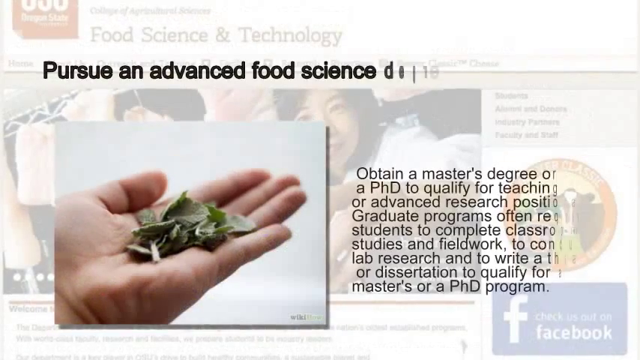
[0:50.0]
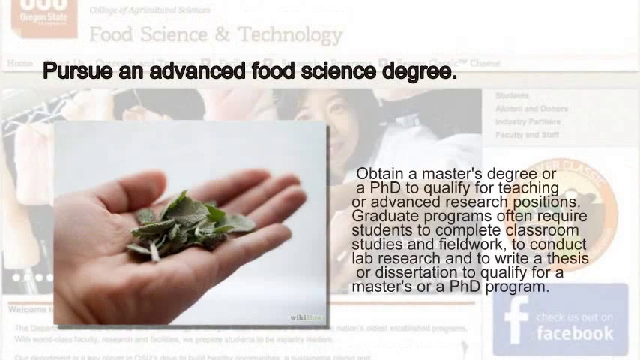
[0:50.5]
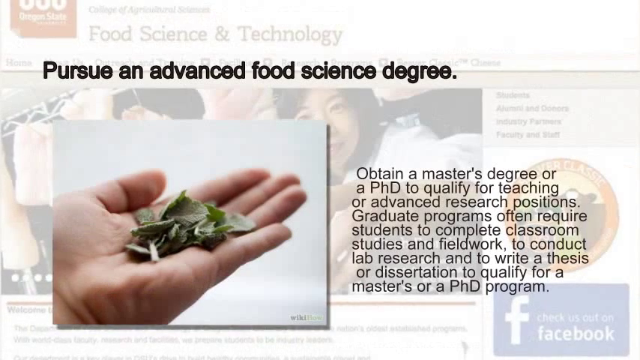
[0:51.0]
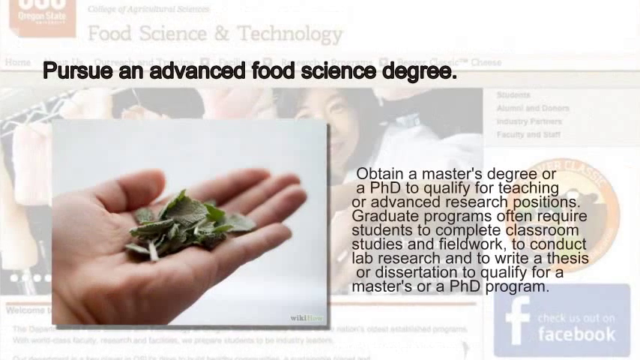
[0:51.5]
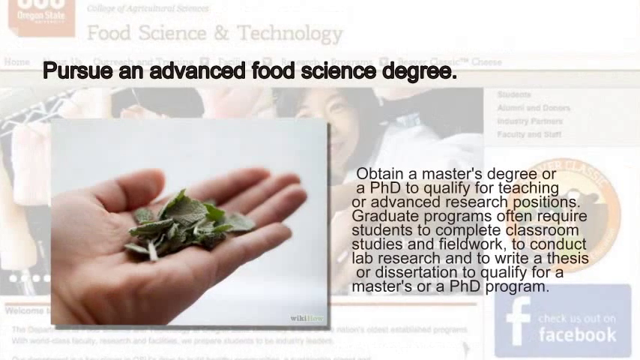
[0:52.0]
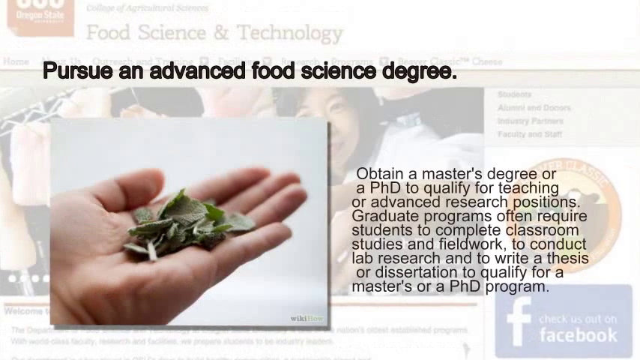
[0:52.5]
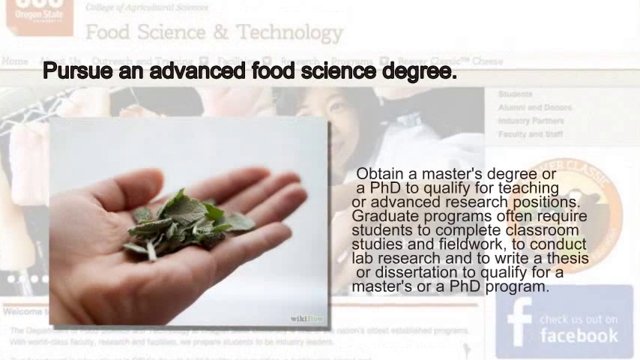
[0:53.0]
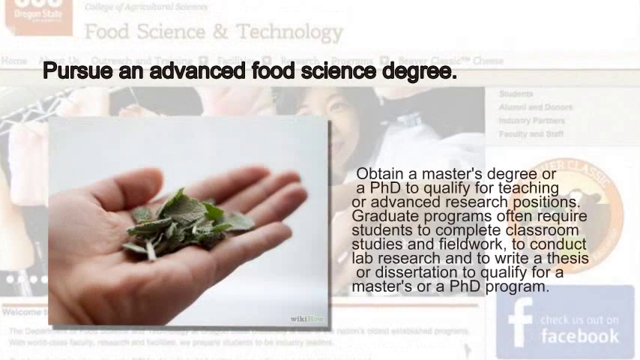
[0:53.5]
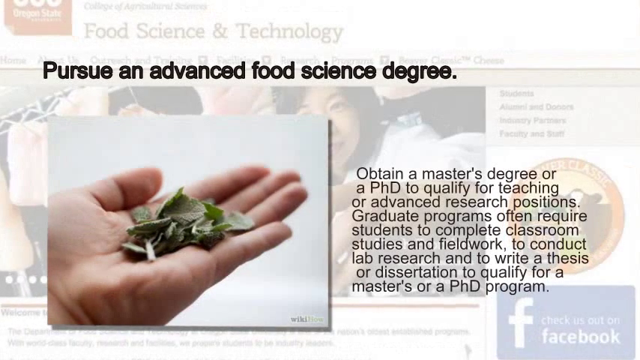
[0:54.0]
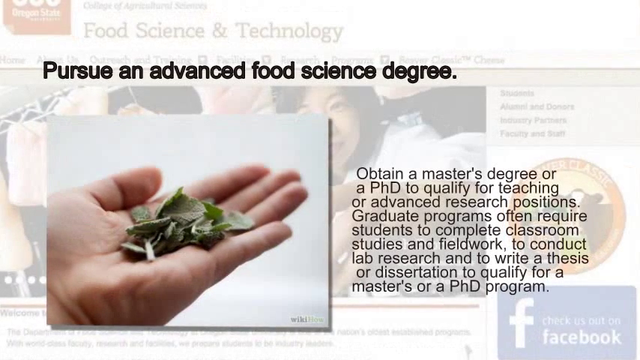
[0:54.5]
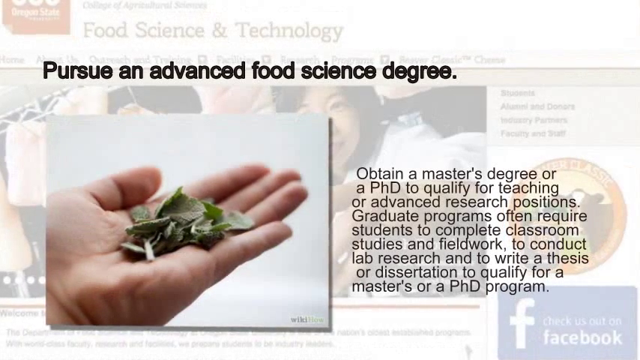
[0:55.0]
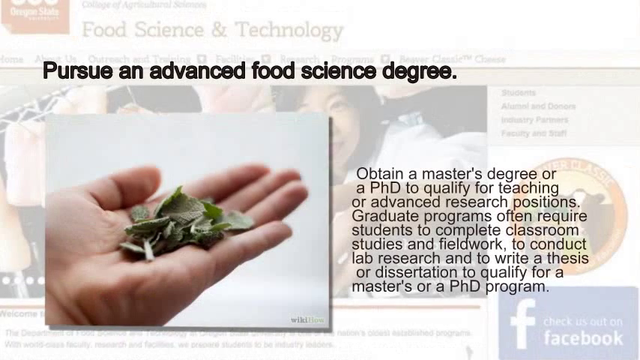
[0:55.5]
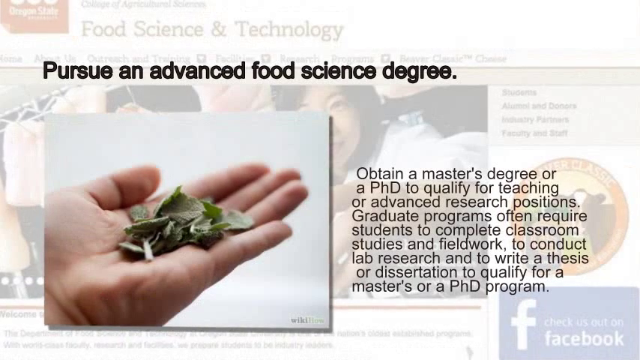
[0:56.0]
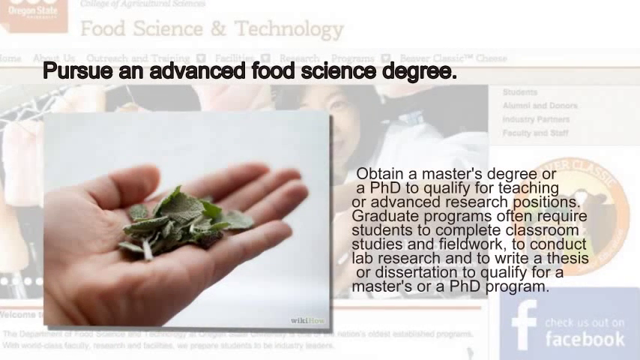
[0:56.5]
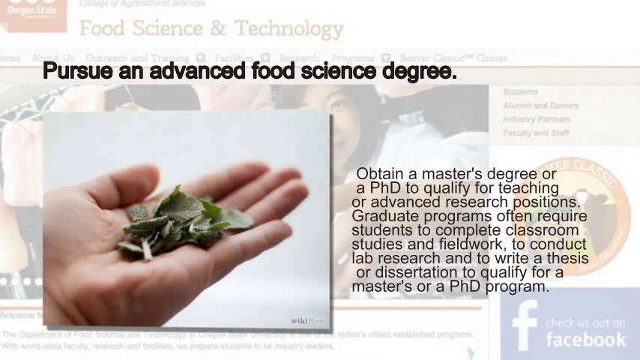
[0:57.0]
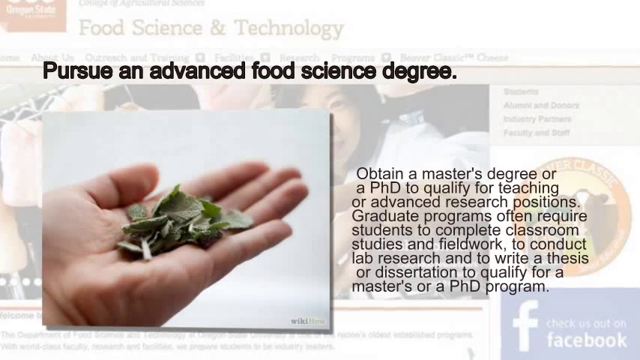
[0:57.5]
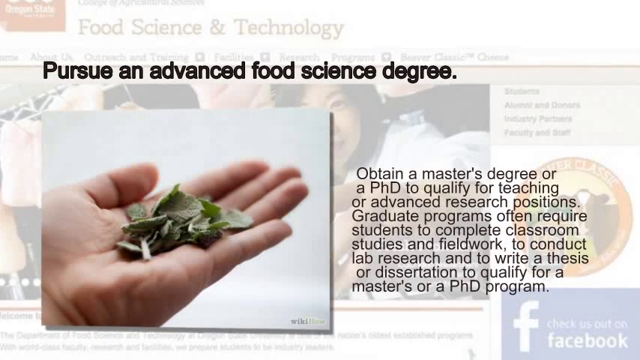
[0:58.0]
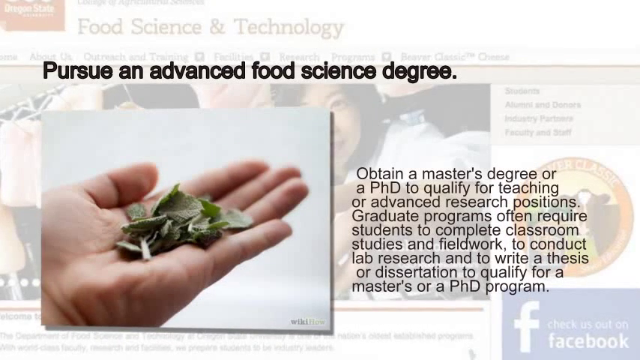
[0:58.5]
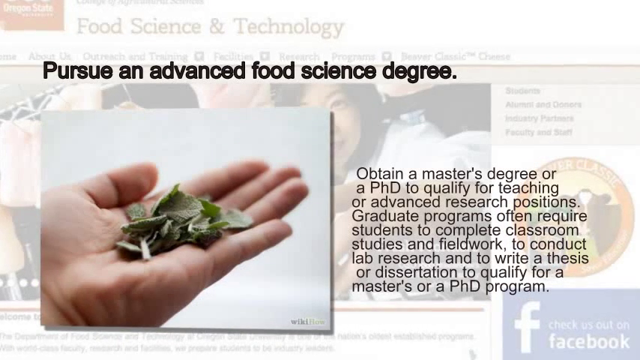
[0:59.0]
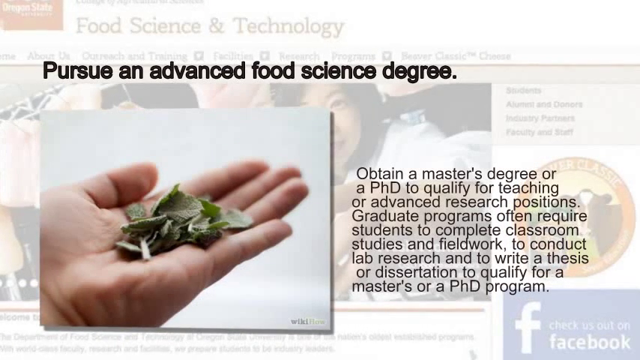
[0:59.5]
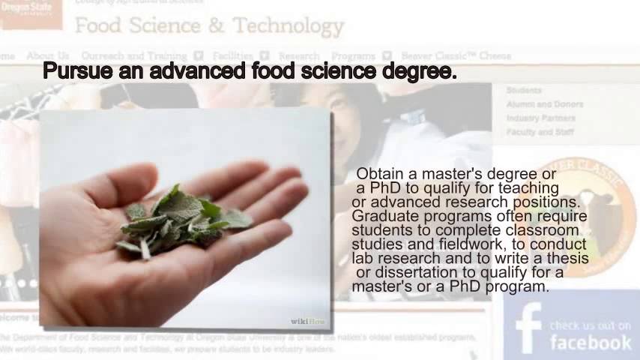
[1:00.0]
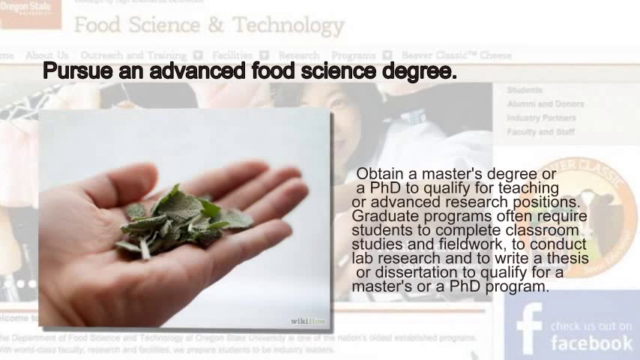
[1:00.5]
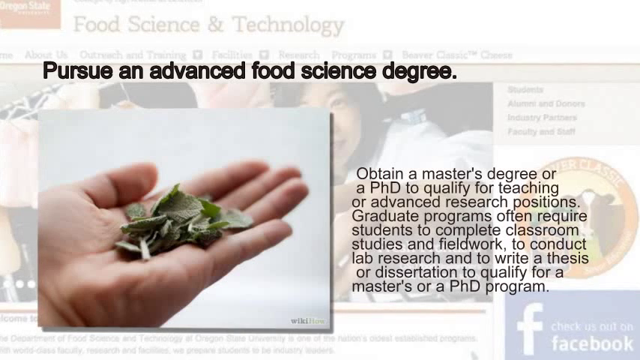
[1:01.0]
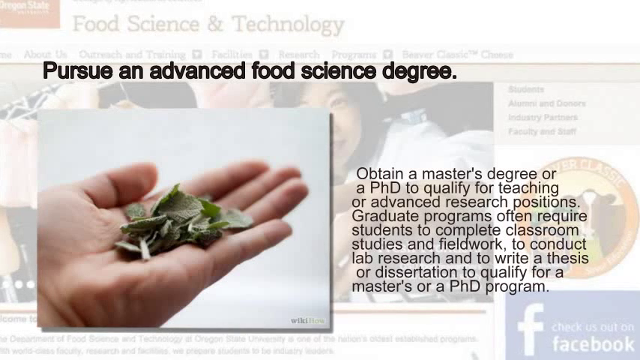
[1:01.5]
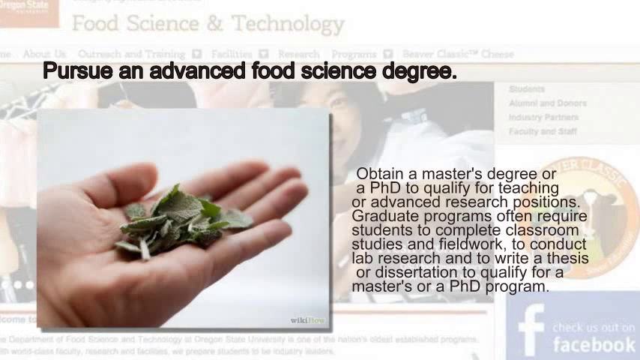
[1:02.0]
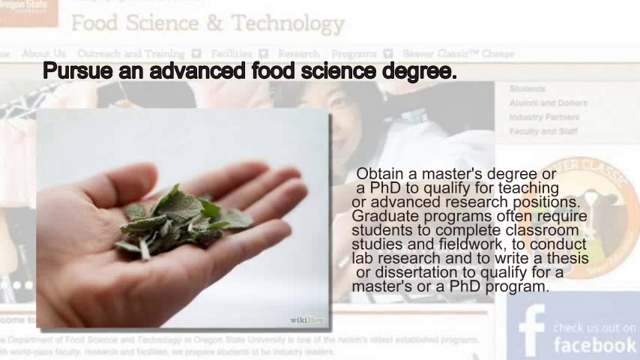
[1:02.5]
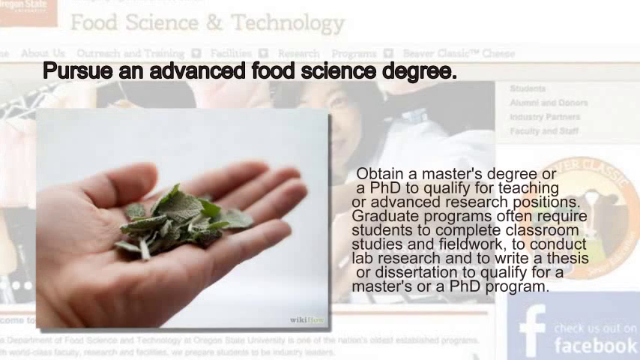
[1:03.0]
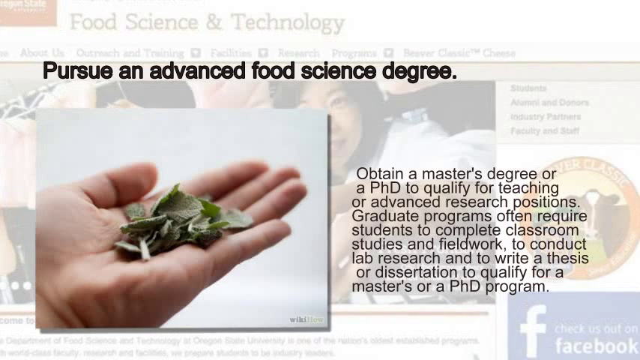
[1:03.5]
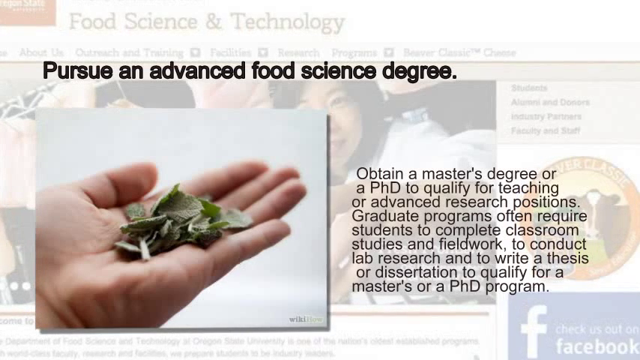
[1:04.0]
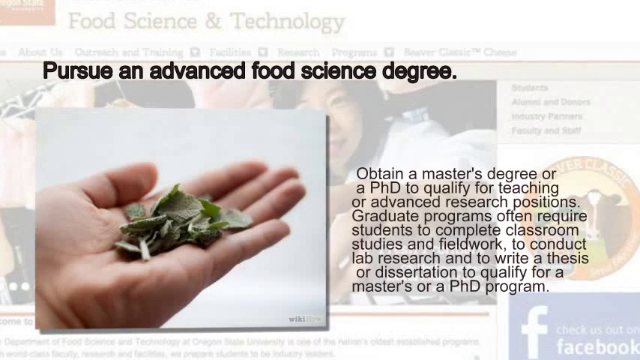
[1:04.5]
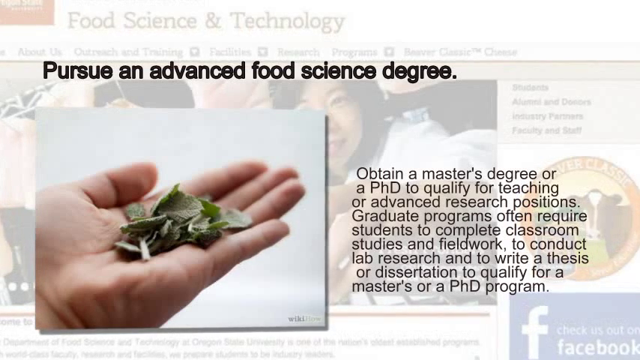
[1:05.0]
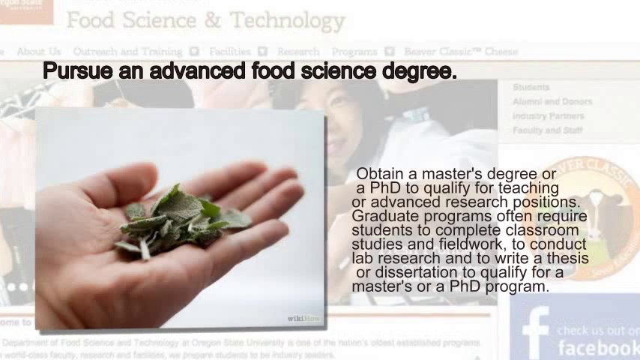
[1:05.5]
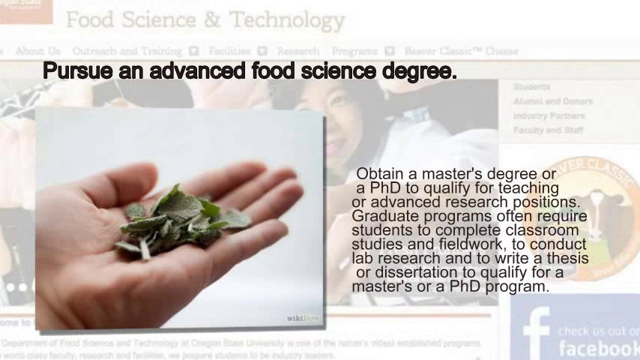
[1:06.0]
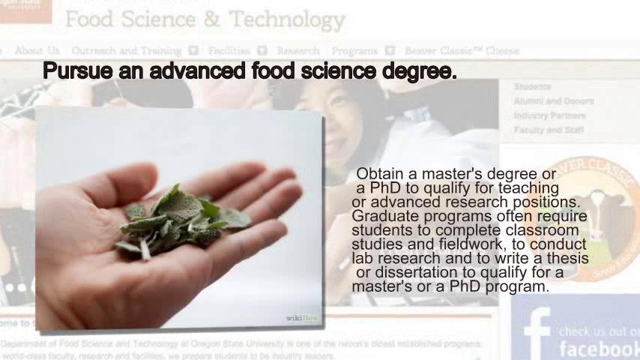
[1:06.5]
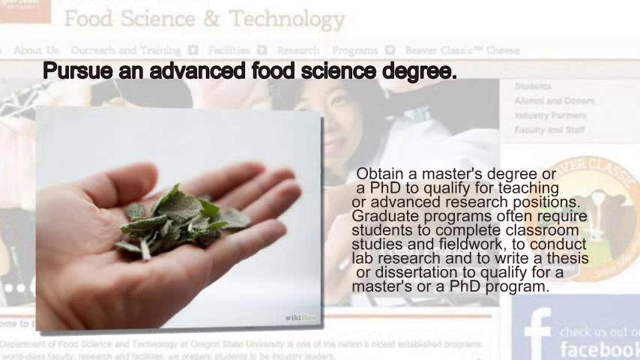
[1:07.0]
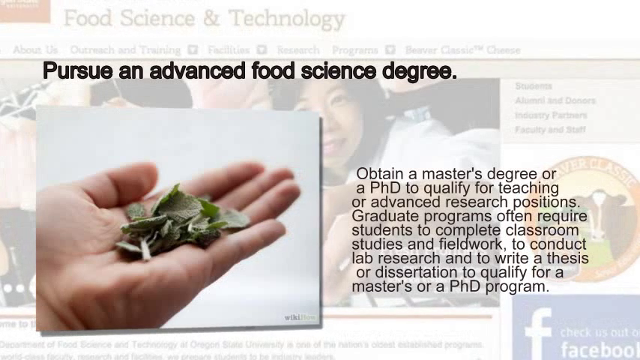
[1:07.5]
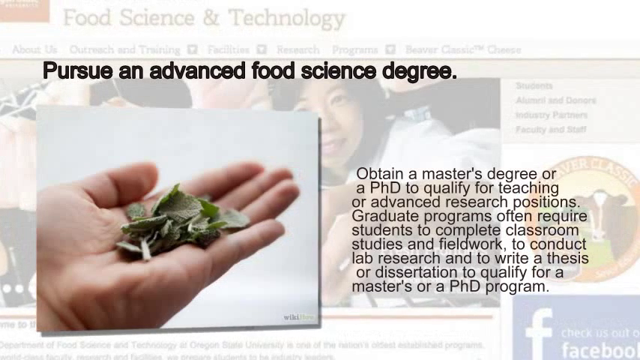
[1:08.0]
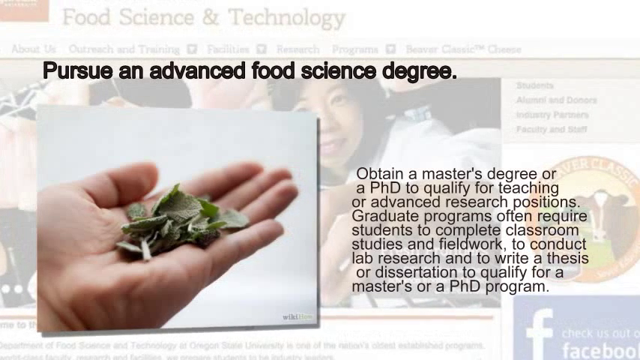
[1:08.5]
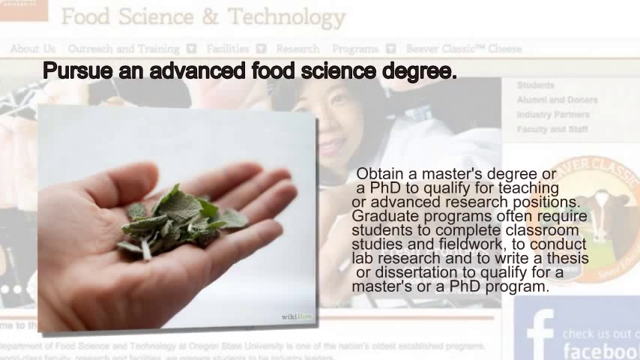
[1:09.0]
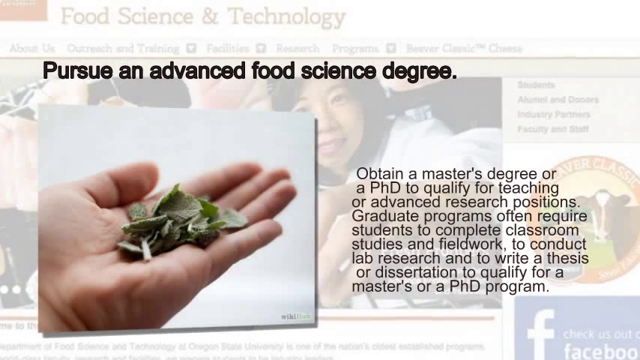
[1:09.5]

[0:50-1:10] The picture seen earlier at the bottom, of the opened hand holding leaves, appears. In the background is the first article with the food science and technology title, with the man and the woman, fading away. The subject is still how to become a food scientist. Text reads "pursue an advanced food science degree" and "obtain a master's degree or a PhD to qualify for teaching or advanced research position. Graduate programs often require students to complete classroom studies and fieldwork, to conduct lab research and to write the thesis or dissertation to qualify for a master's or a PhD program." The hand is in one frame with the writing "pursue an advanced food science degree" above it, and the text about obtaining a master's degree is on the right side.